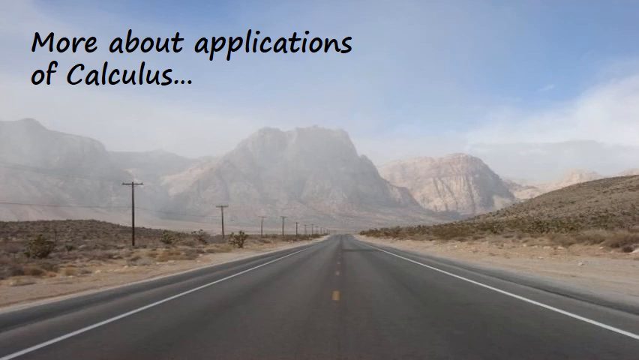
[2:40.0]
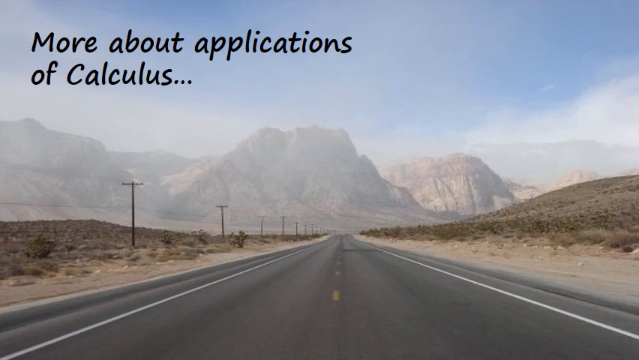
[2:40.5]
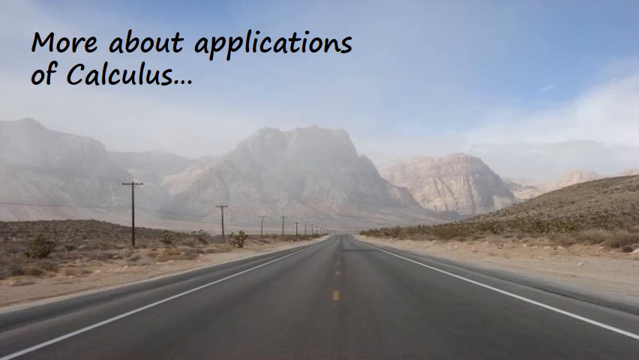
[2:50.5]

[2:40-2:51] A picture taken from the middle of a street shows a dark gray road directly in front of the camera, going on until it can no longer be seen. A yellow dotted line runs down the middle of the street, with white shoulder lines on the left and right. On the left side of the street are telephone poles about every 100 yards with telephone wires going to each of them, and in the background brown shrubs, dirt and rocks. On the right side are dark weeds, brown plants, dirt and rocks. As far as can be seen, there are large mountains that take up the whole width of the screen and are foggy, and above them is blue sky that is also foggy. In the top left-hand corner of the screen, written in black, is "More About Applications of Calculus".